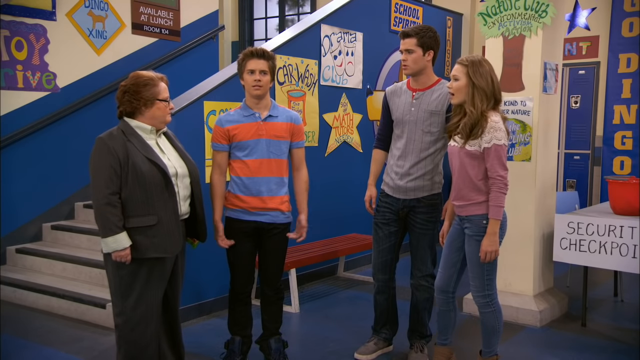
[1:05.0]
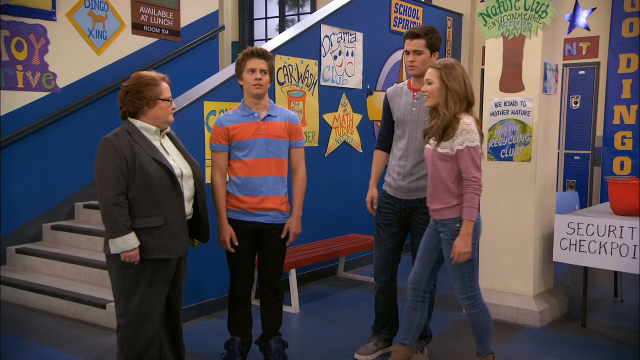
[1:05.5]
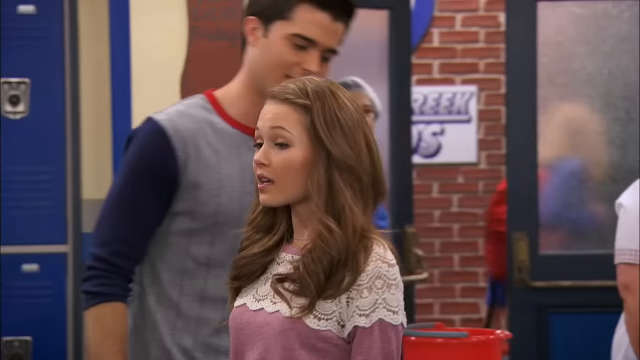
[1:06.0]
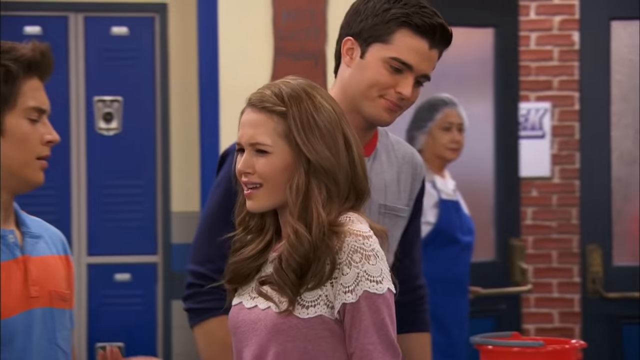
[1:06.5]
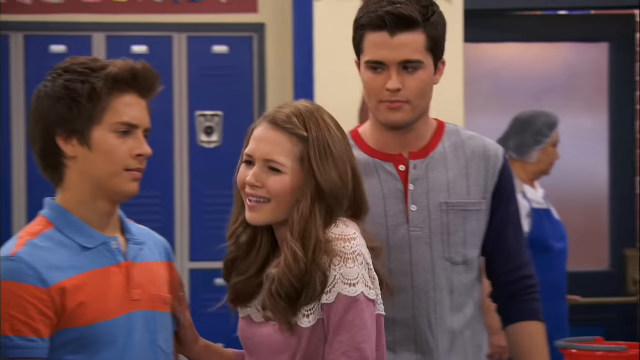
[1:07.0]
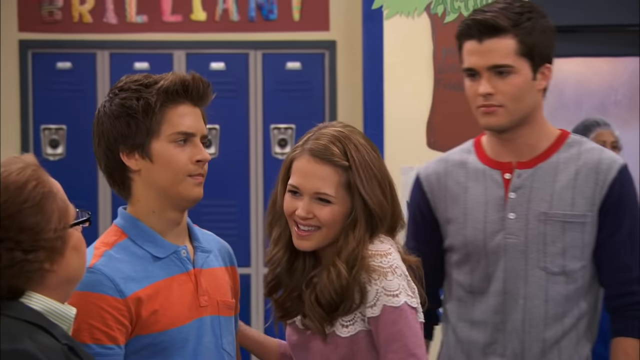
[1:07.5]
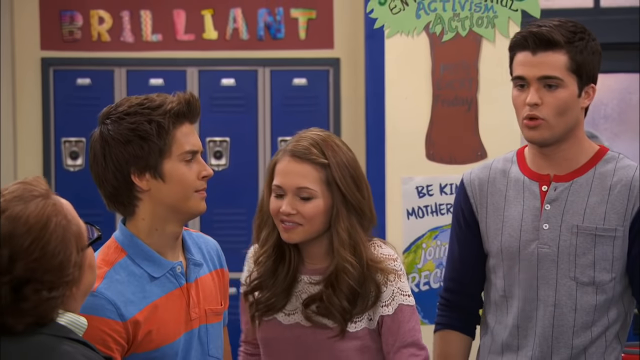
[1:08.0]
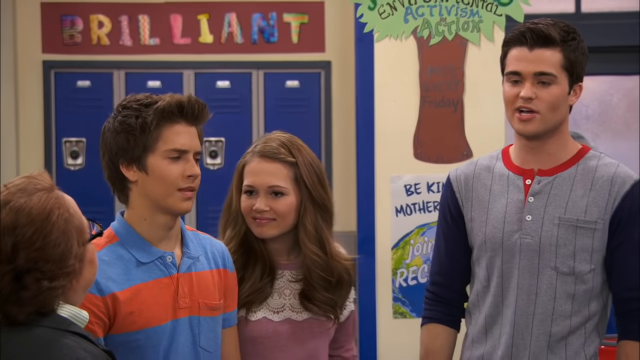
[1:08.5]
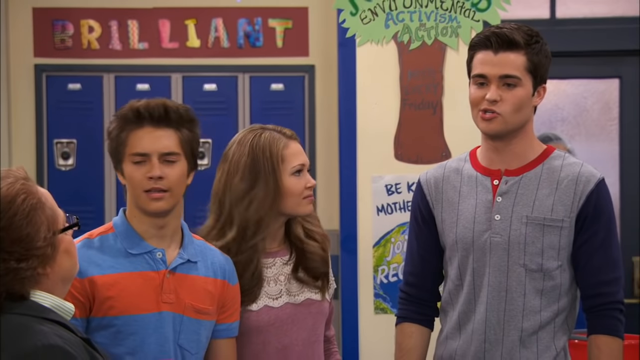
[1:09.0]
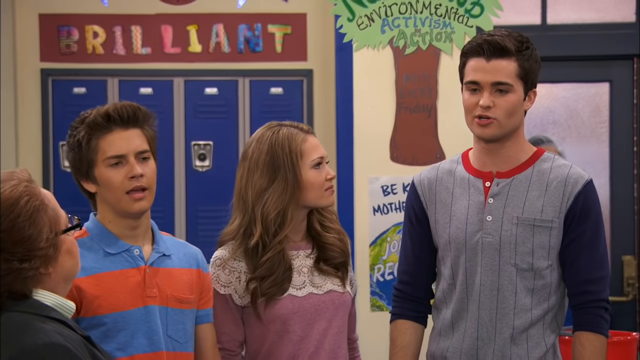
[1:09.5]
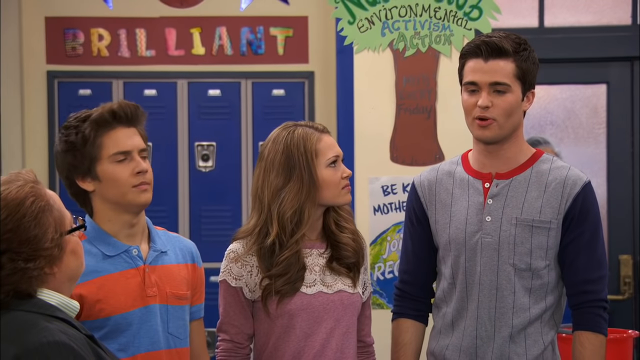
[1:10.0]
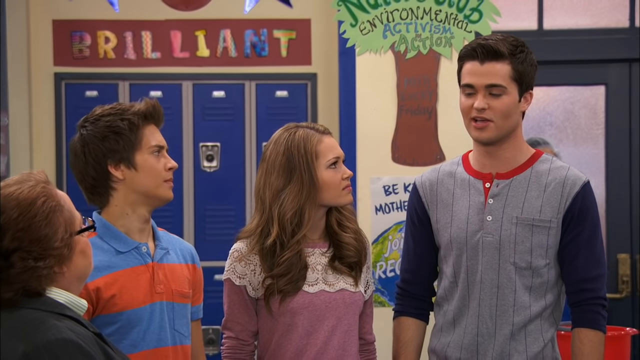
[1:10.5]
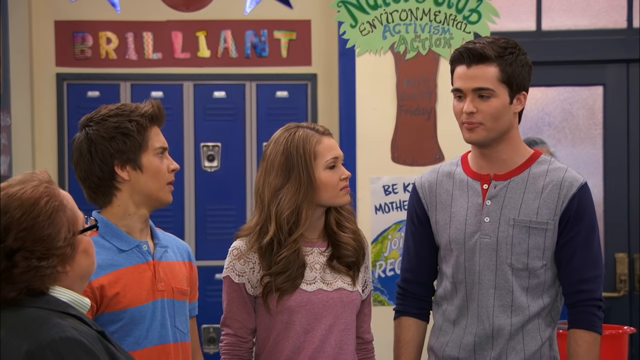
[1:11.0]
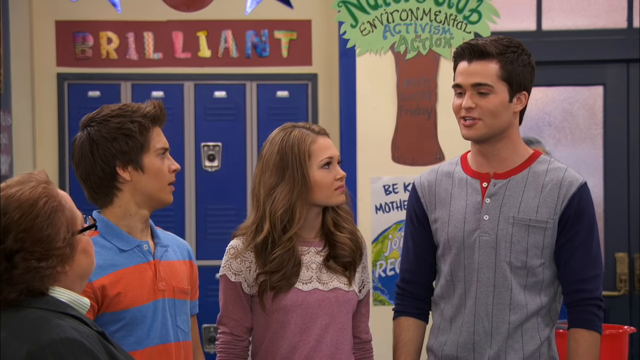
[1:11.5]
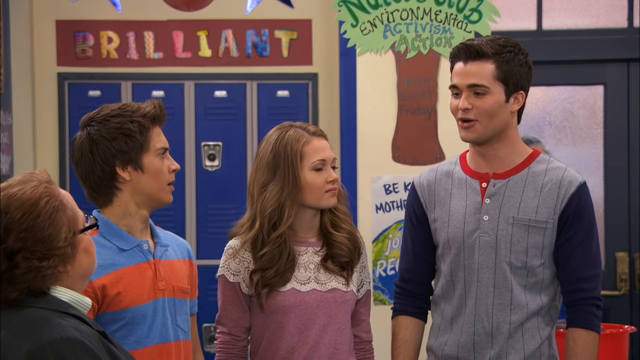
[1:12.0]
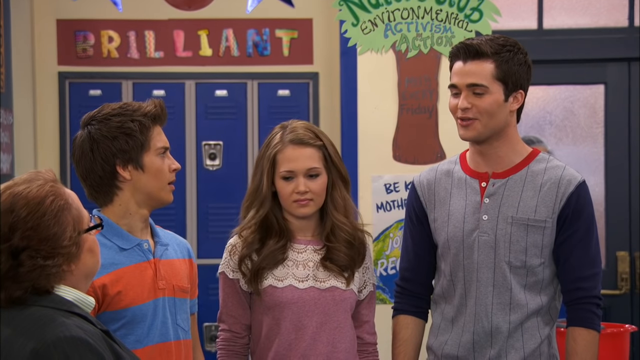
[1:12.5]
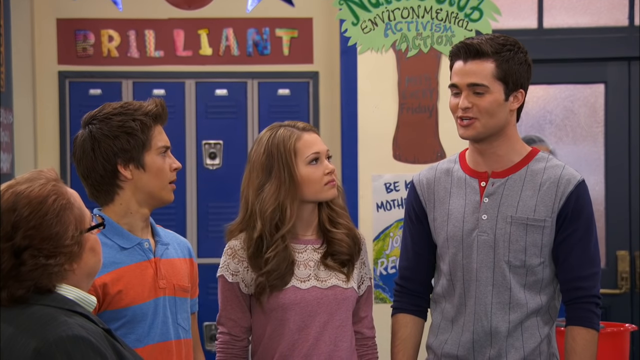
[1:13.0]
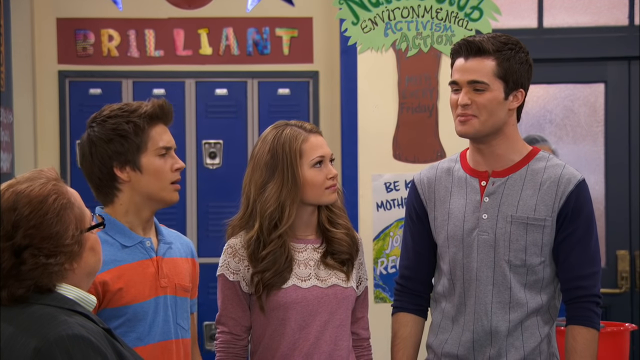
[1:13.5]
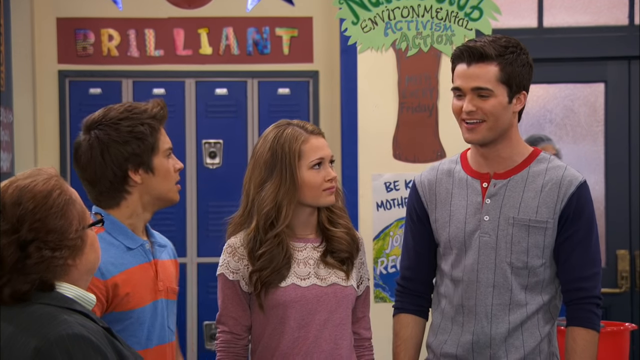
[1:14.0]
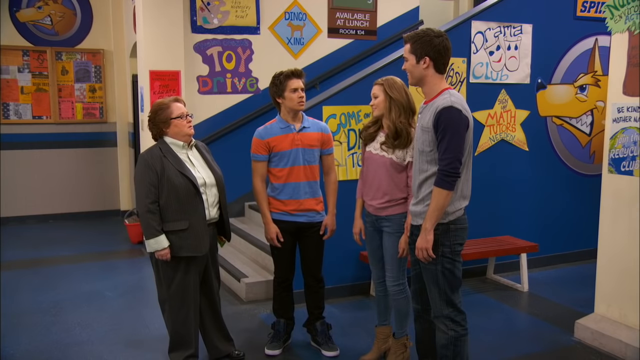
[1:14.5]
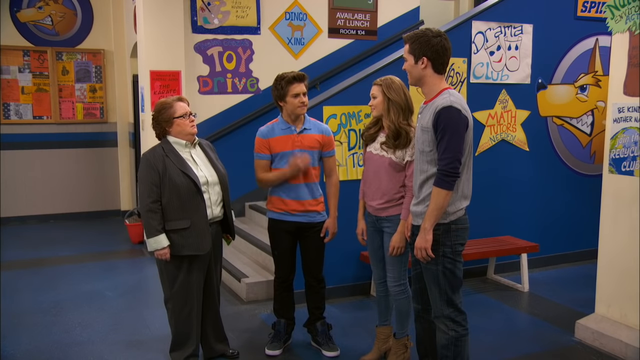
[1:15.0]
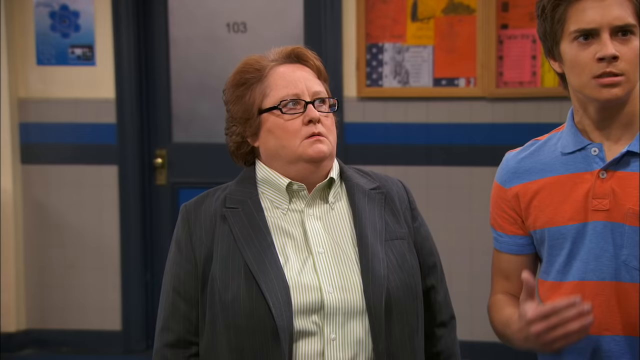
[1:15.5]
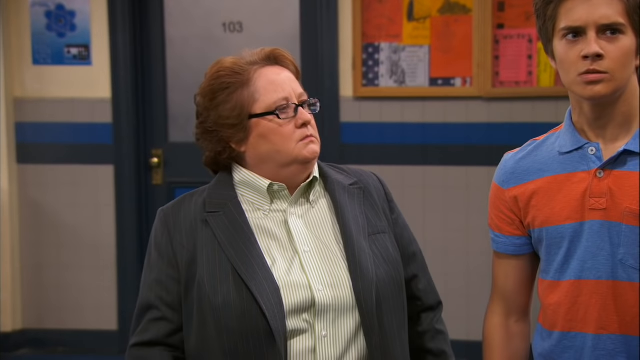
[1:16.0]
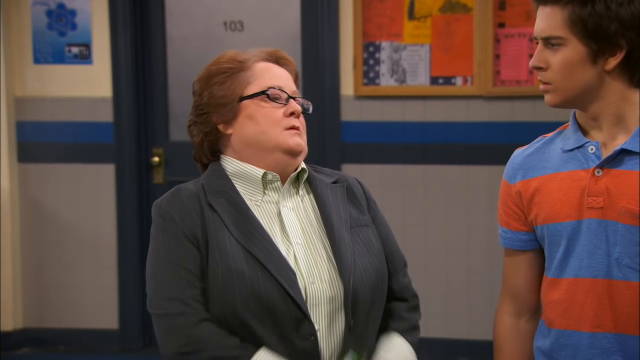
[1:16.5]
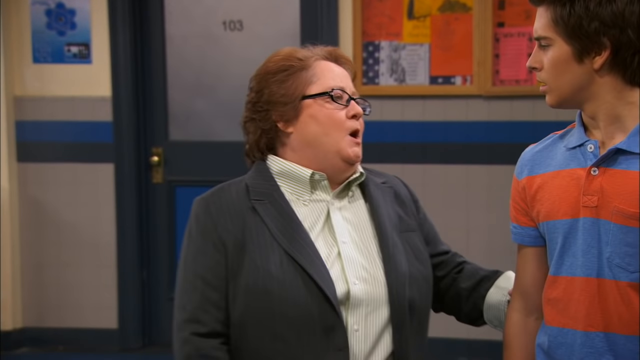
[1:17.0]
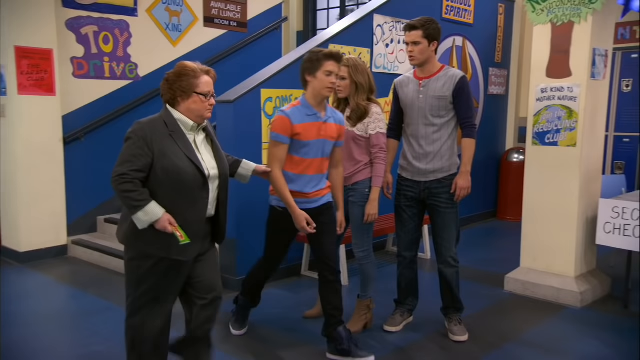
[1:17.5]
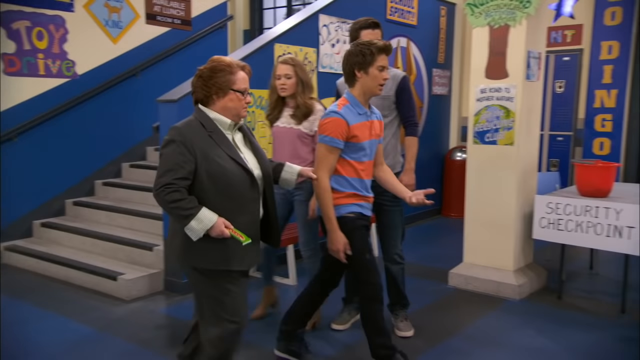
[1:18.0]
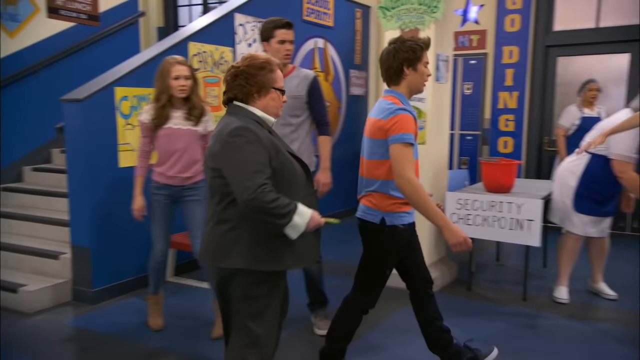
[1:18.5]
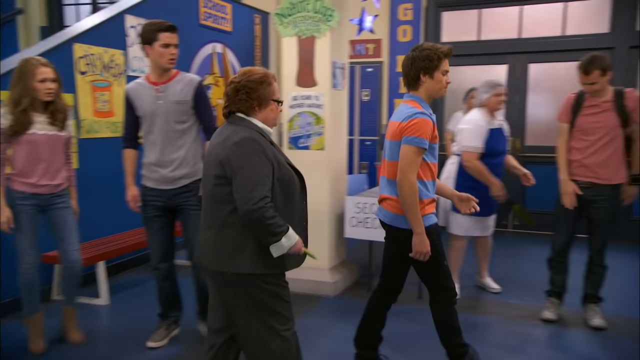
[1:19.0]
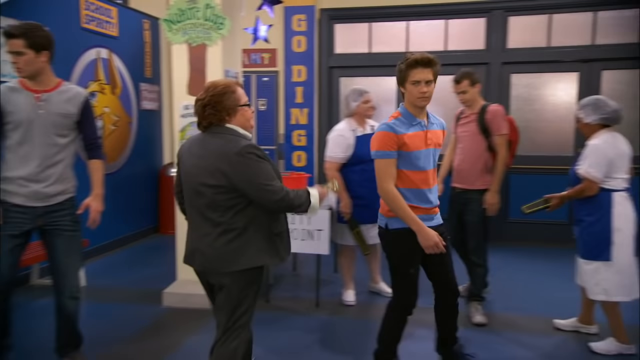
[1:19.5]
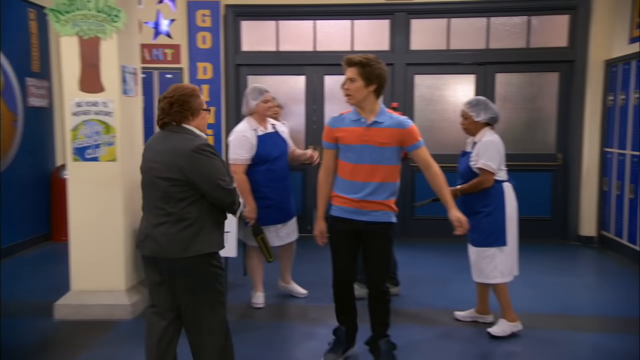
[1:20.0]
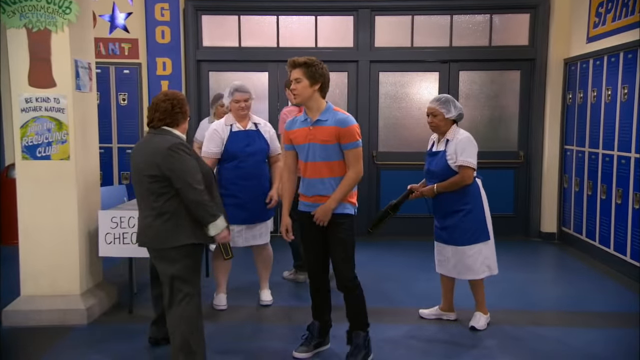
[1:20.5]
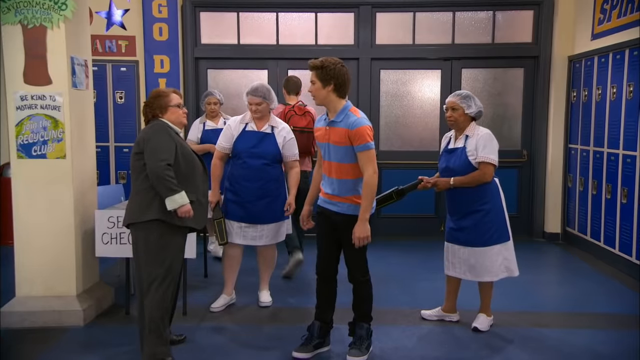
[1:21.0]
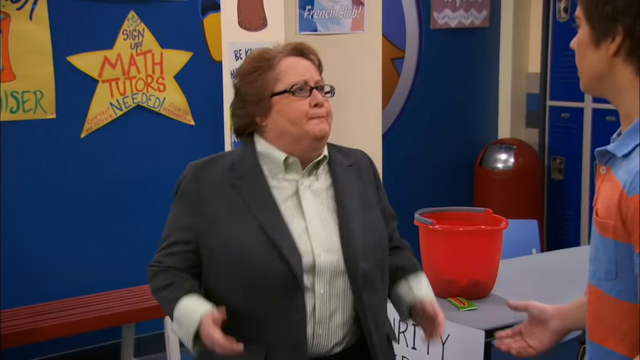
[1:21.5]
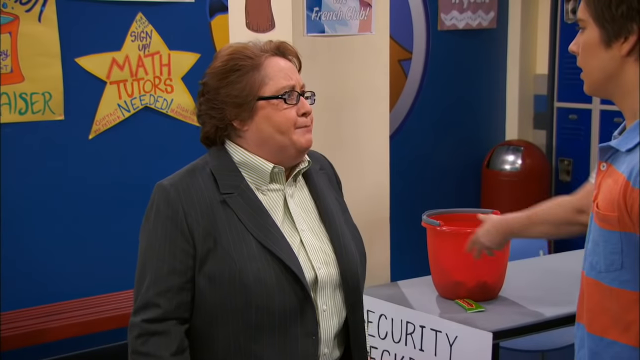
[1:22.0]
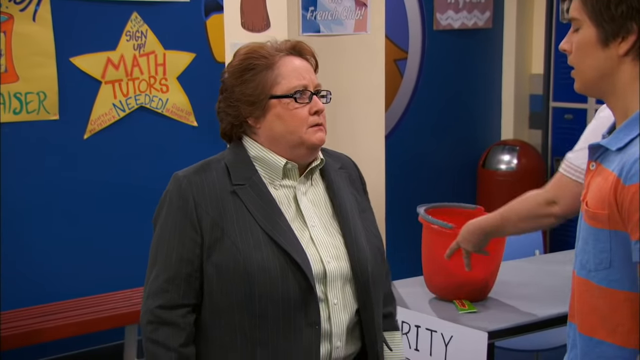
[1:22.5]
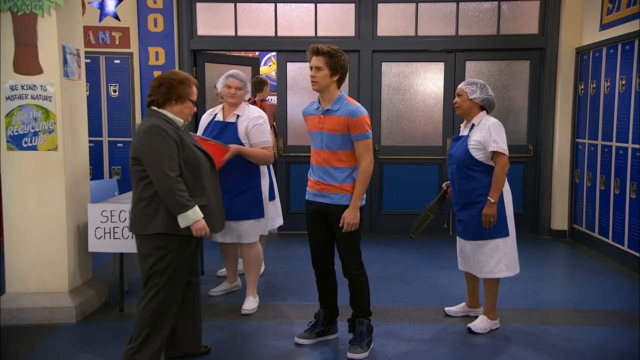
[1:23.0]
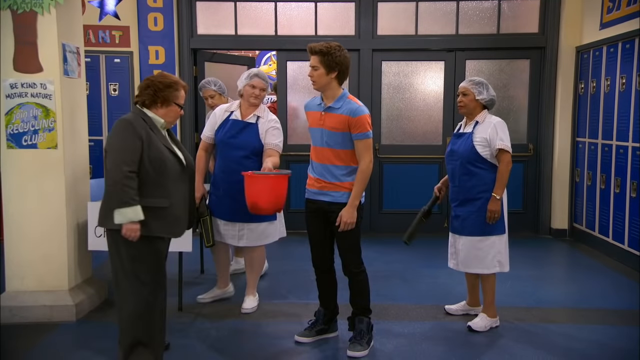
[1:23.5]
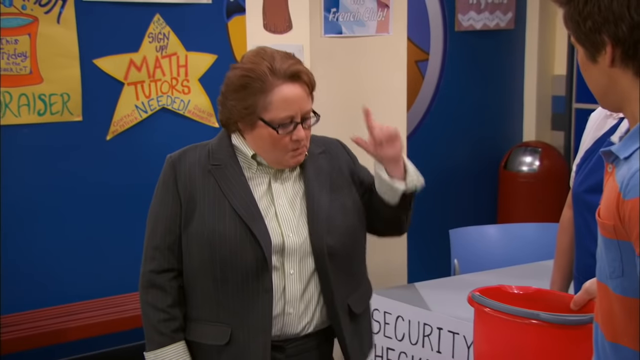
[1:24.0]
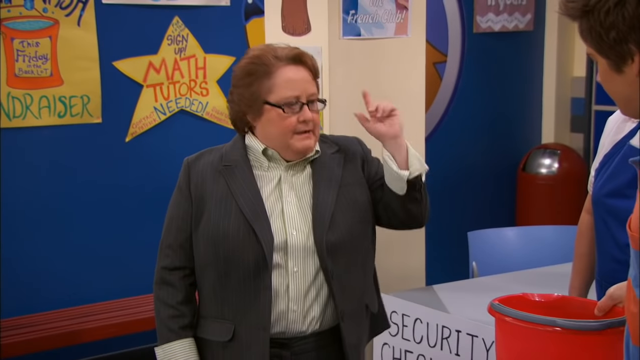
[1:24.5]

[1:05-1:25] The girl slowly walks up and gets in between the two boys as they all keep talking to the teacher. She talks, and then the taller boy on the right talks. The teacher then leads the boy in the blue and orange striped shirt by his right arm over to the checkpoint, still inside the school, and it looks like he is about to be wanded. One of the ladies wanding the students grabs a bucket and pushes it toward them as the boy looks on at the lady with the glasses.